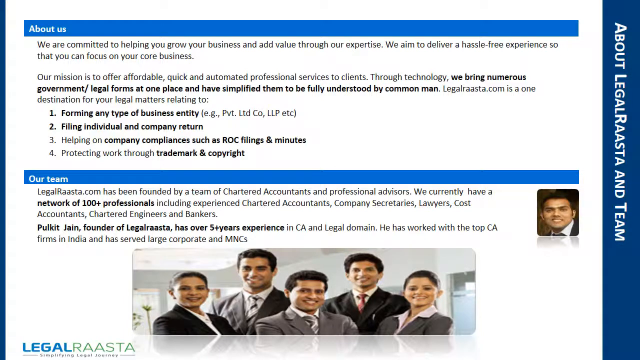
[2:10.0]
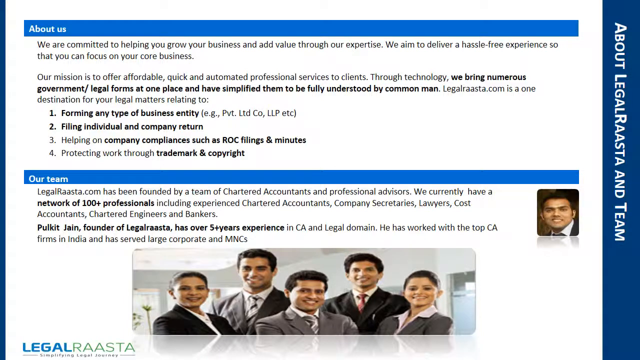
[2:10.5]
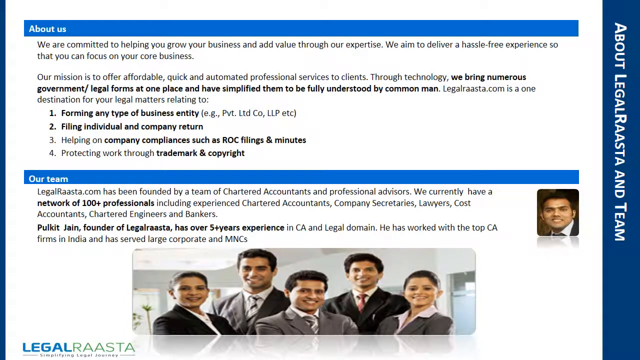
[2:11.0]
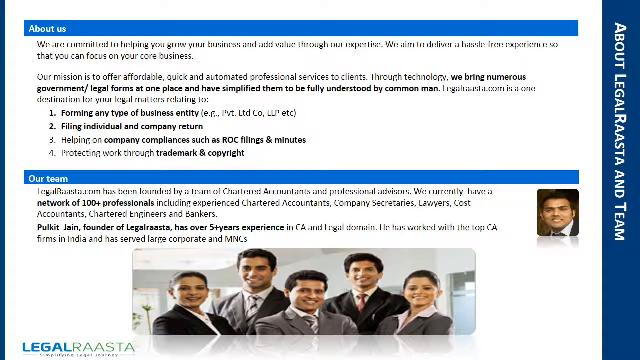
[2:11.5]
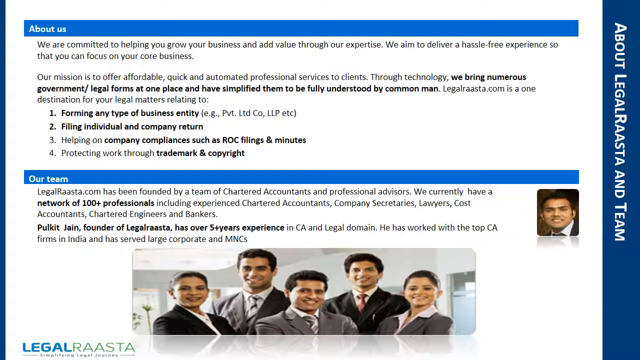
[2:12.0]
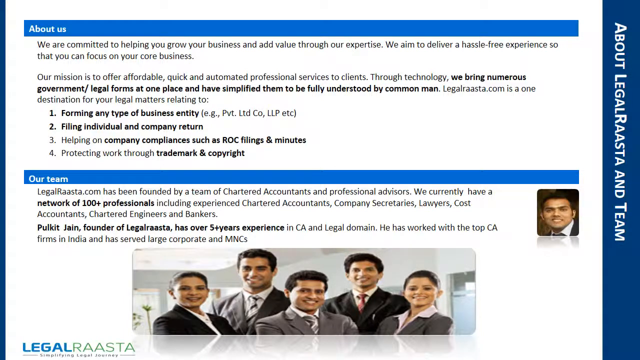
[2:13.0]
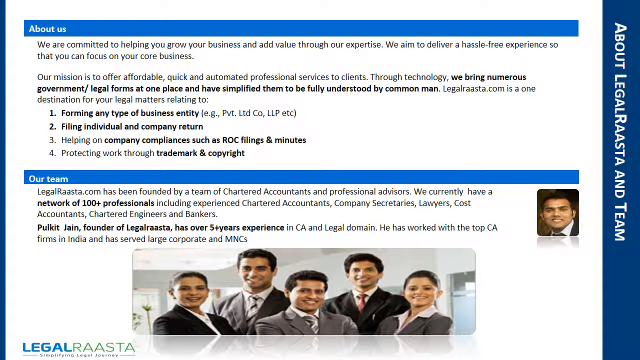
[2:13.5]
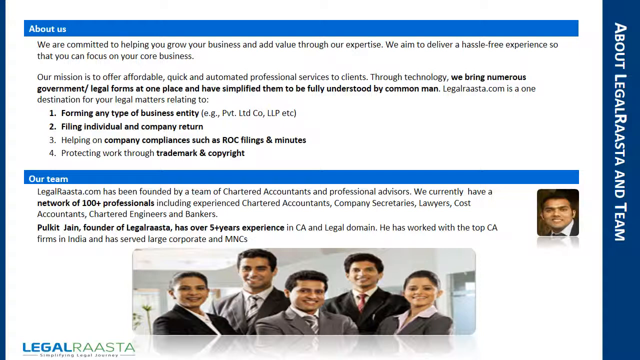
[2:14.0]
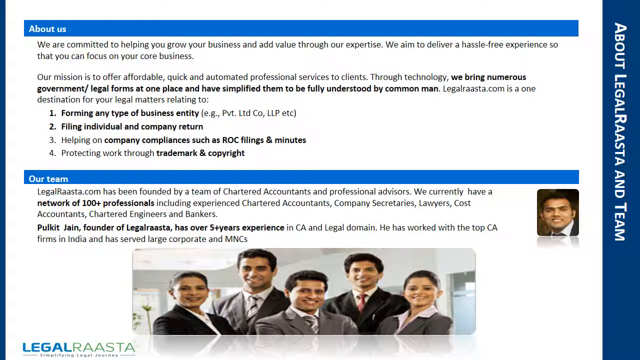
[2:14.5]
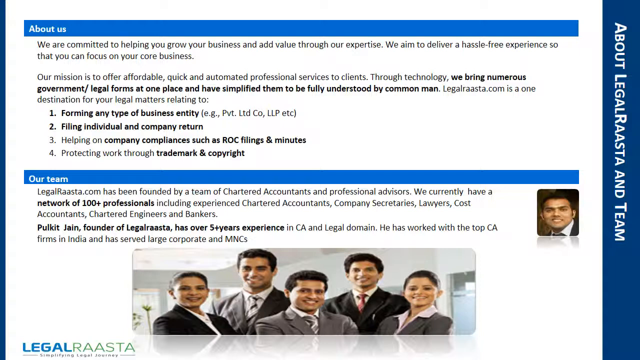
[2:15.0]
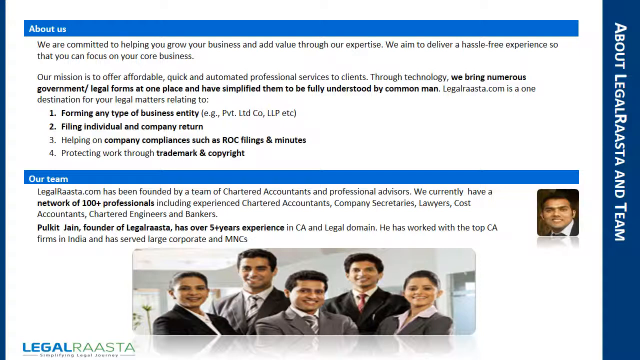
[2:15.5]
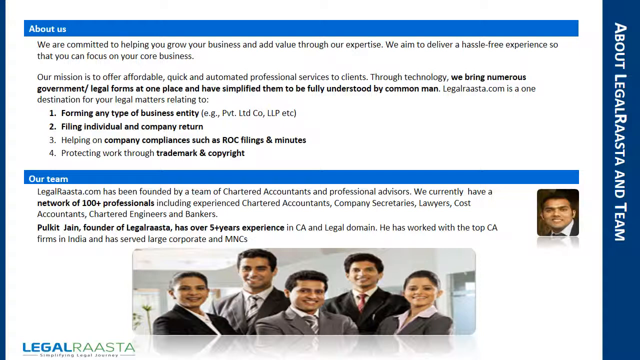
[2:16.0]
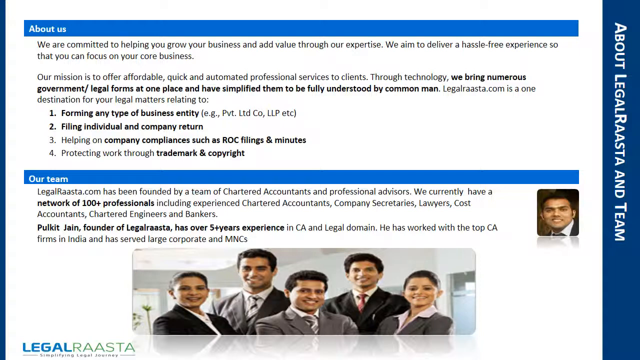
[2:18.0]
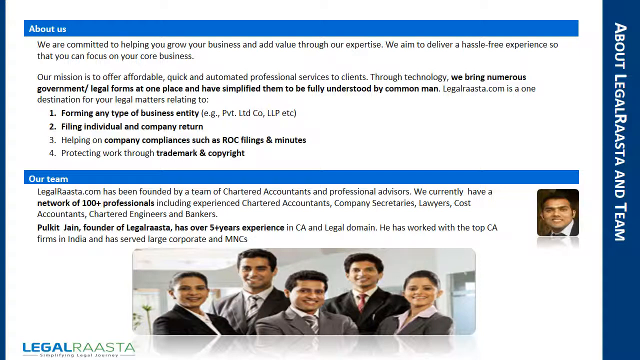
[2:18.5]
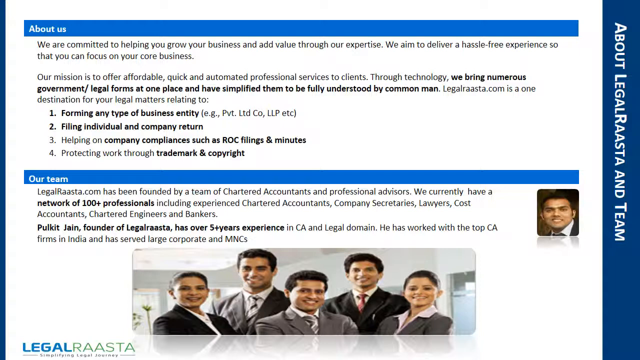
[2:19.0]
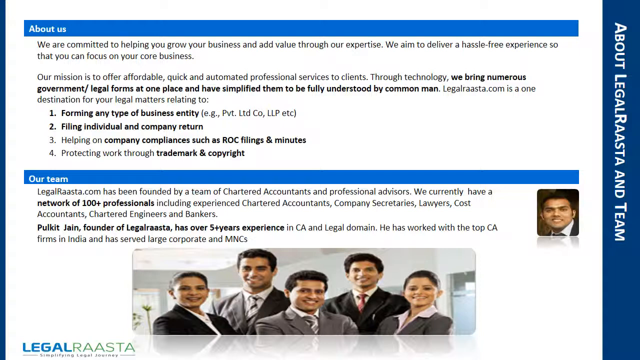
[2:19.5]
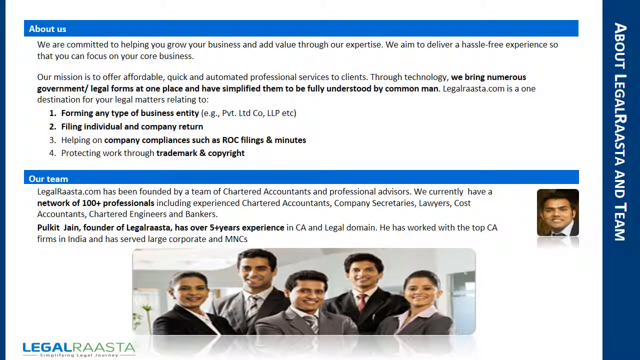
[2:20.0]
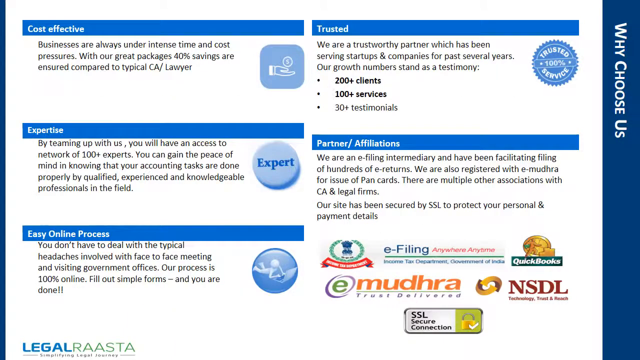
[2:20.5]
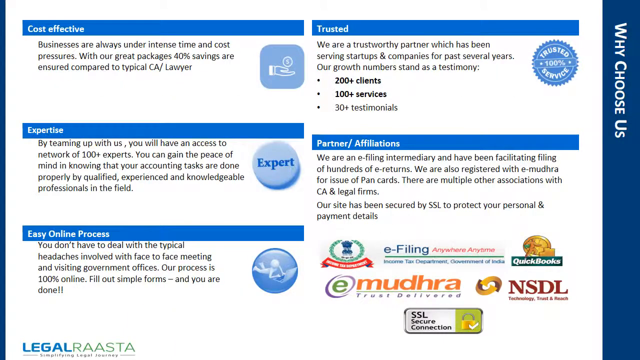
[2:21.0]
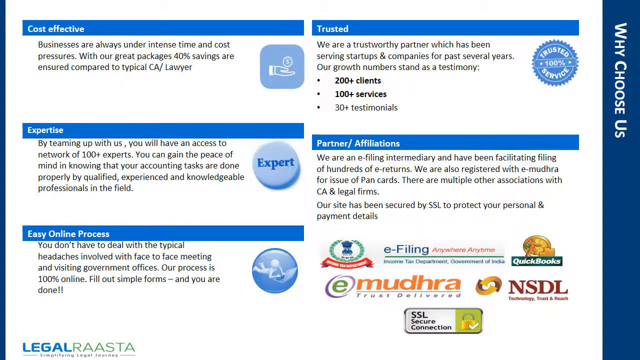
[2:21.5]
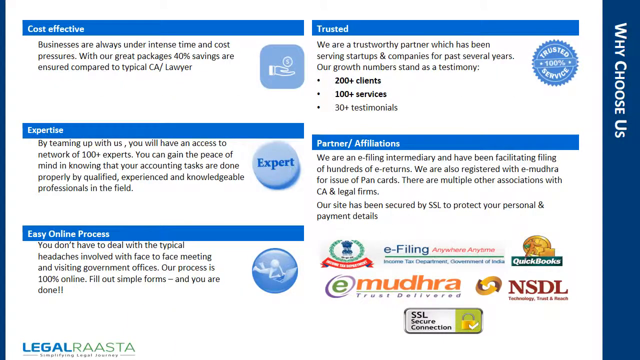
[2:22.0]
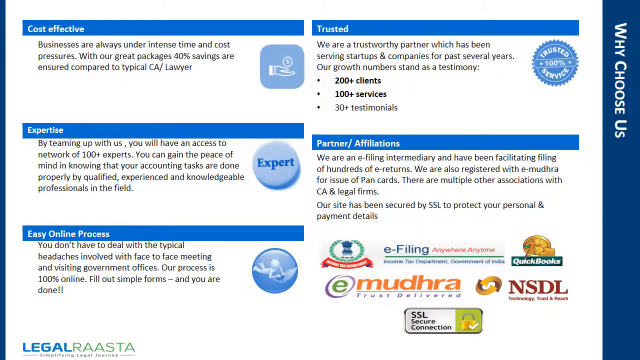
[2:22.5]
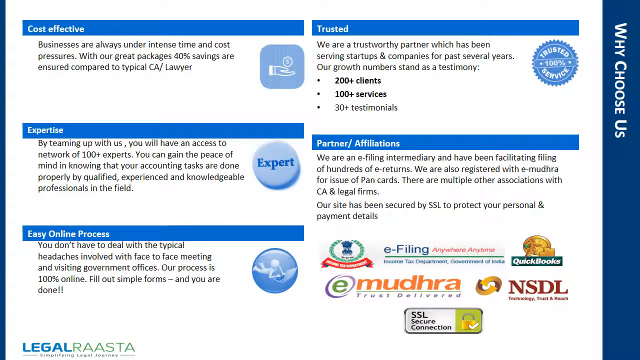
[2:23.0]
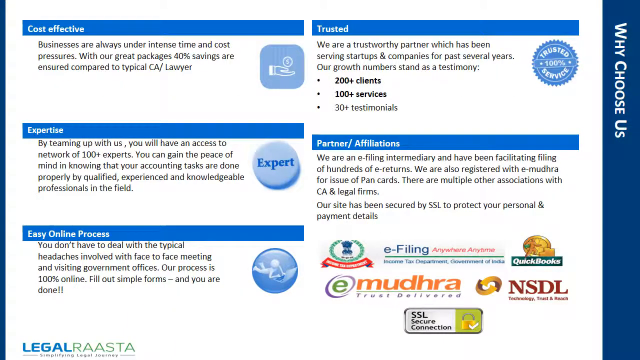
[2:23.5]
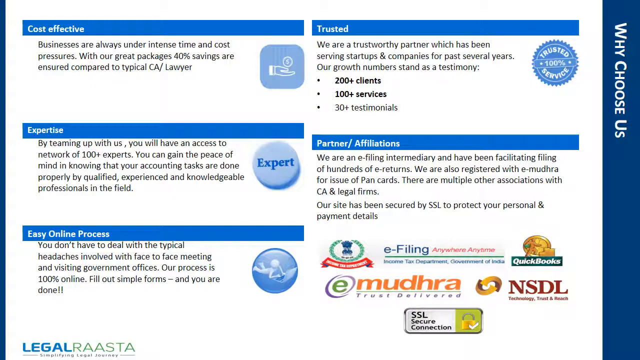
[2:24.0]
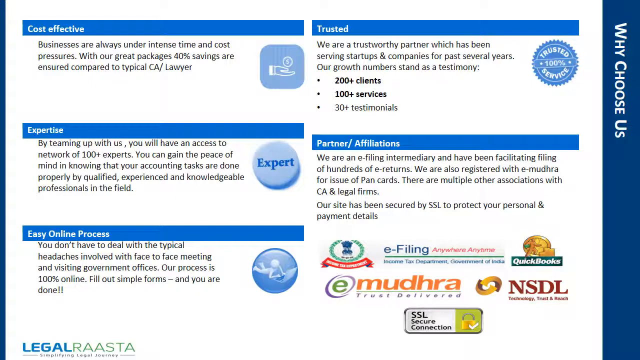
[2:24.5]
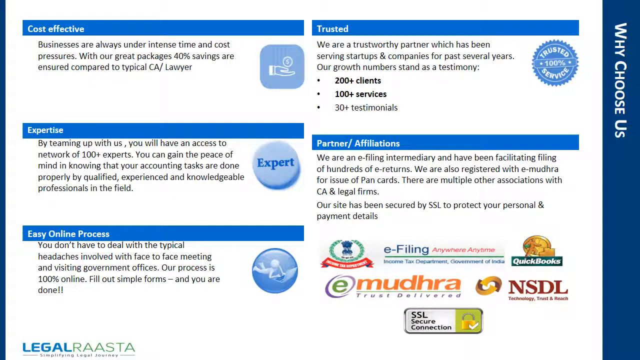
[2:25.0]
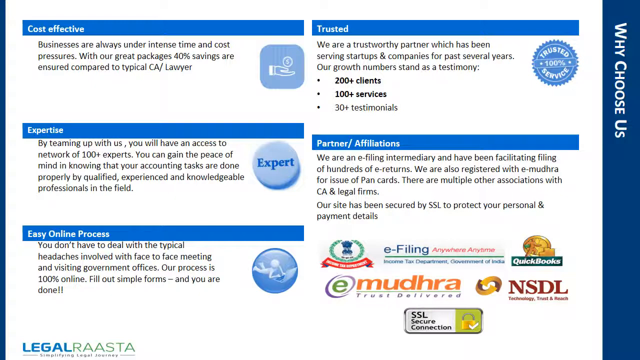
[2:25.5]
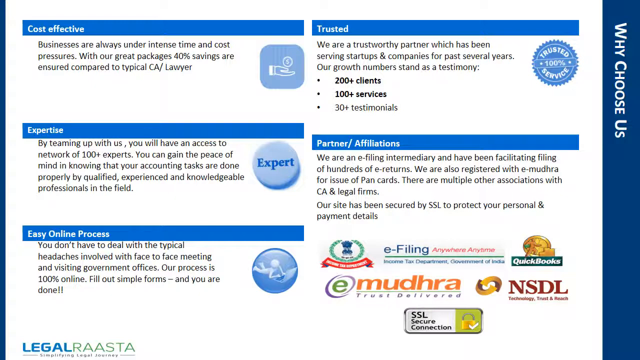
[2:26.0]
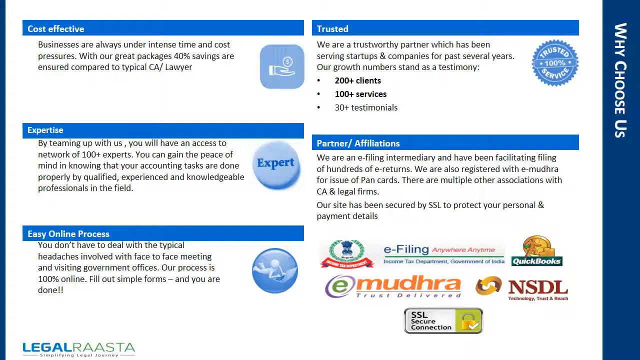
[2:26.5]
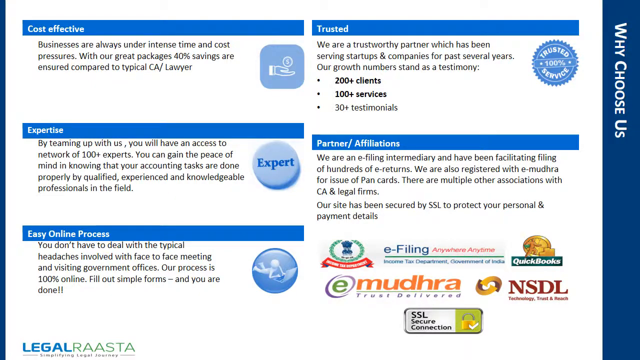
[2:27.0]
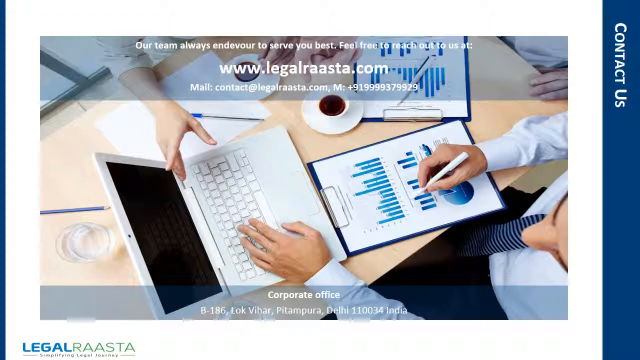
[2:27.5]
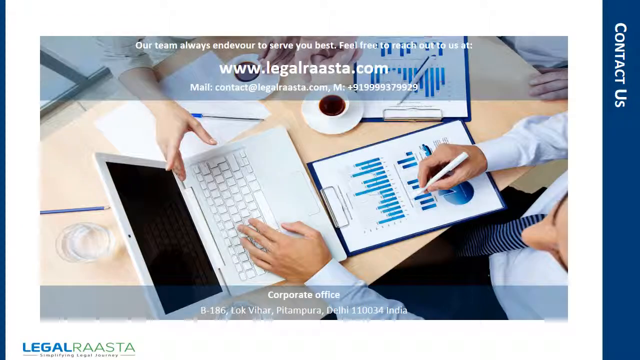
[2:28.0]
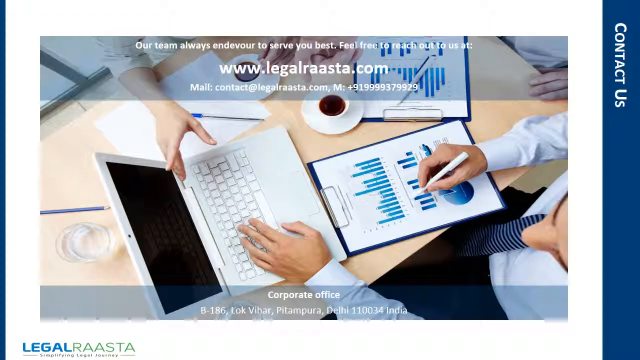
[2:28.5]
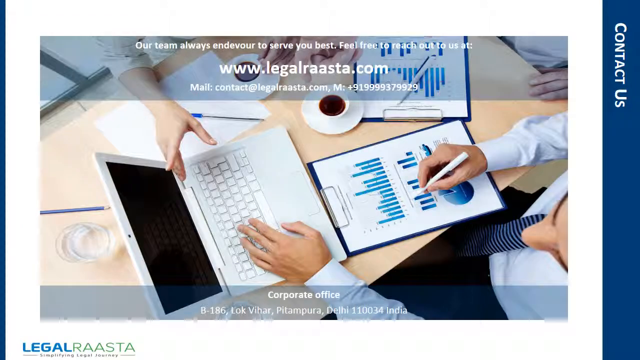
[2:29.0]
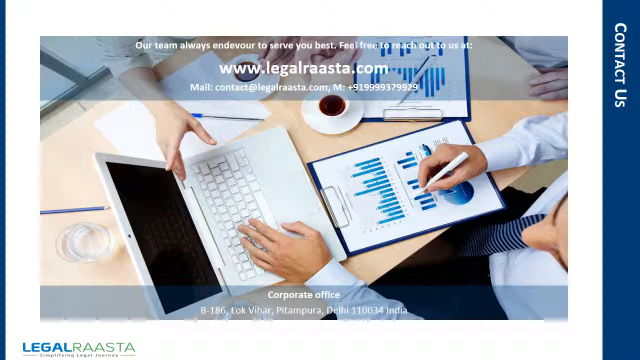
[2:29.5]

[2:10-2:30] A slide presents information about the Legal Raasta team. A blue heading block runs across the top with white text on the left reading "about us," followed by a short paragraph giving the mission statement and a numbered list of services offered, such as forming any type of business entity, filing individual and company returns, helping a company with compliances, and protecting work through trademark and copyright. Below, another blue heading block runs across the slide with "our team" in white on the left, followed by a short paragraph describing Legal Raasta as a network of over 100 professionals, including chartered accountants, chartered engineers and bankers, company secretaries, lawyers, and cost accountants. It then gives some information on the founder, Pulkit Jane, with a small headshot on the right of what looks like a younger Indian man in a business suit. At the bottom is a group picture of three men and two women, all wearing business professional suits; it looks somewhat like a picture from an attorney law firm website, and all of the people are Indian. The next slide gives information on "why choose us" in two columns. In the left column, a blue header box at the top reads "cost effective," with a short paragraph below and a small icon on the right that kind of looks like a hand holding up a coin. Below it, another blue header box reads "expertise," with a paragraph and a light blue circle icon with dark blue letters reading "expert inside." Next, a blue header block reads "easy online process," with a paragraph and a circle icon that looks like a person using a laptop, the person being a plain white body with no visible features such as hair, face, or eyes. At the top of the second column, a blue header block reads "trusted," with a paragraph, a bullet point list, and an icon of a circular seal reading "trusted service, 100%." Below it, a header block reads "partner / affiliations," with information on the companies Legal Raasta is partnered or affiliated with and company logos including e-filing, QuickBooks, NSDL, Mudhra, and SSL secure connection.